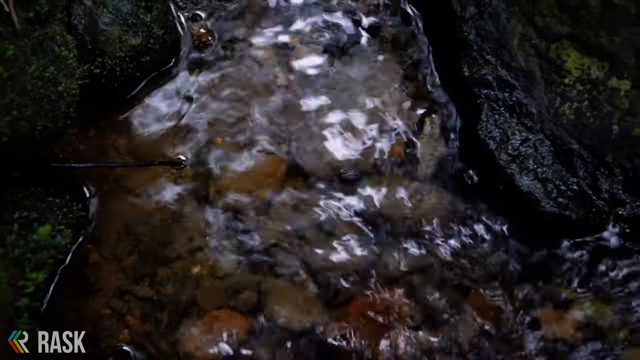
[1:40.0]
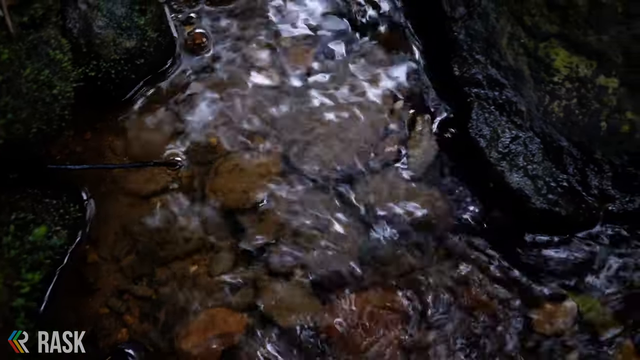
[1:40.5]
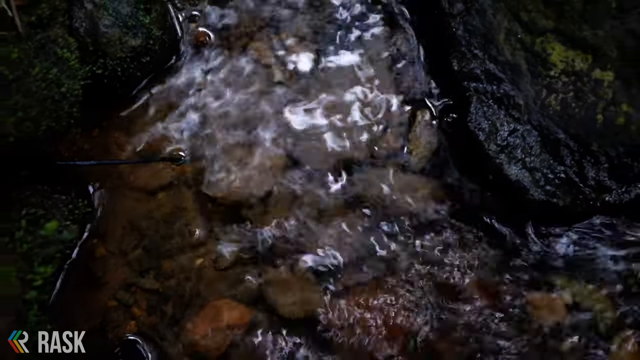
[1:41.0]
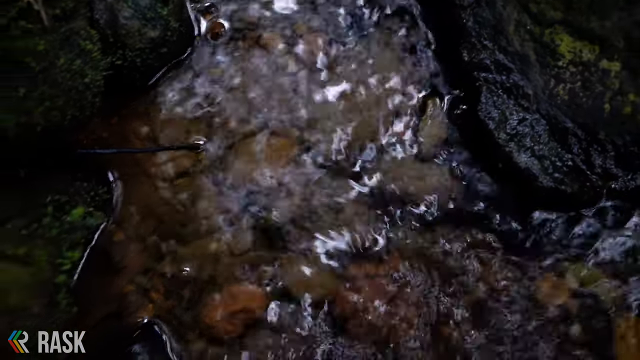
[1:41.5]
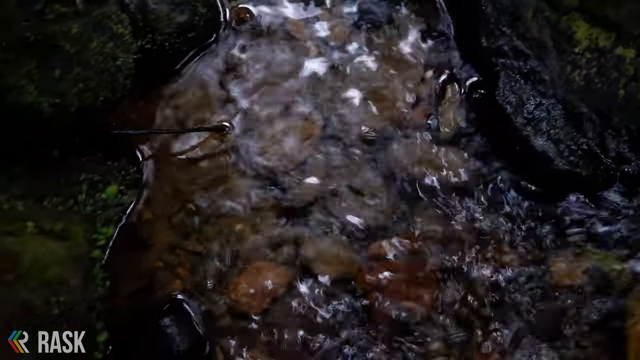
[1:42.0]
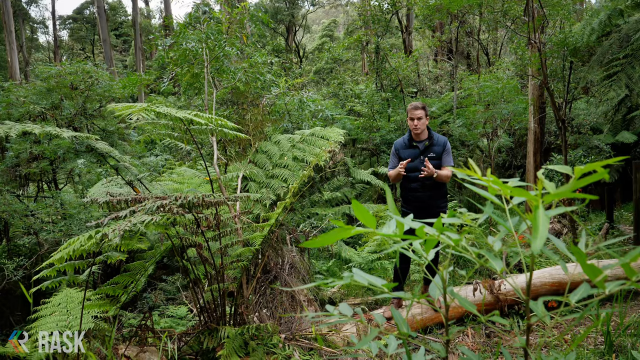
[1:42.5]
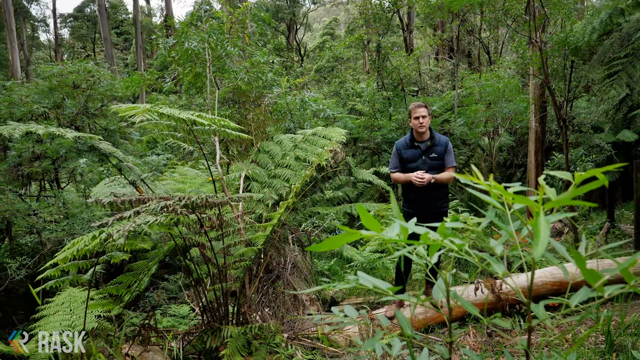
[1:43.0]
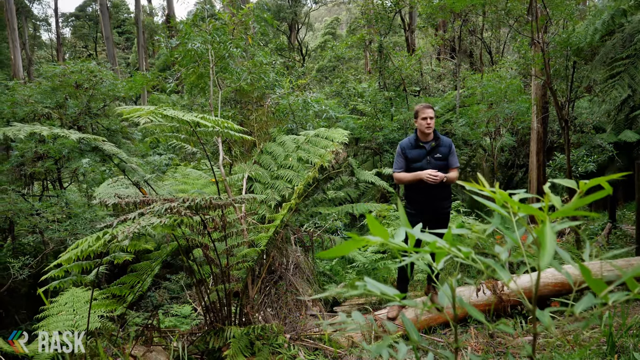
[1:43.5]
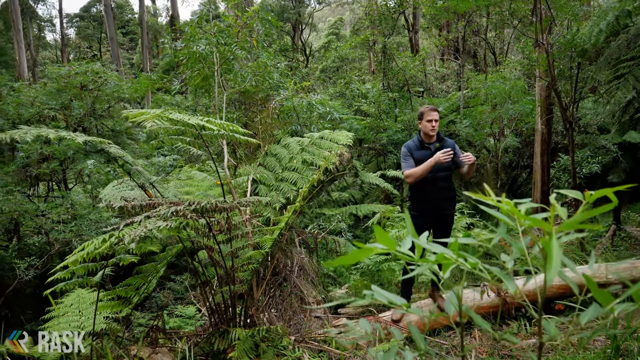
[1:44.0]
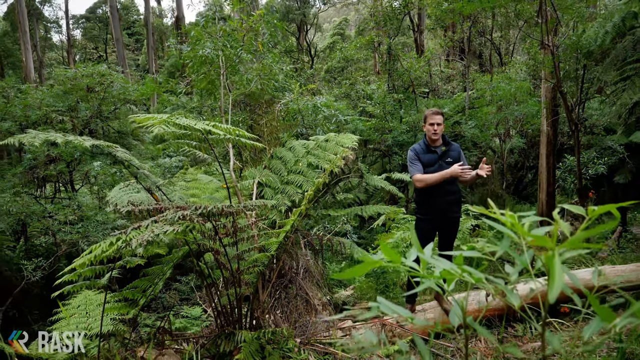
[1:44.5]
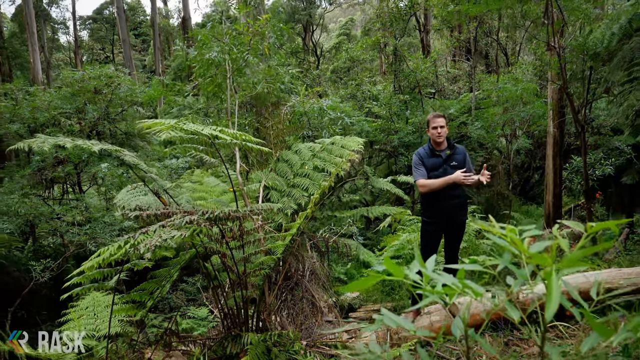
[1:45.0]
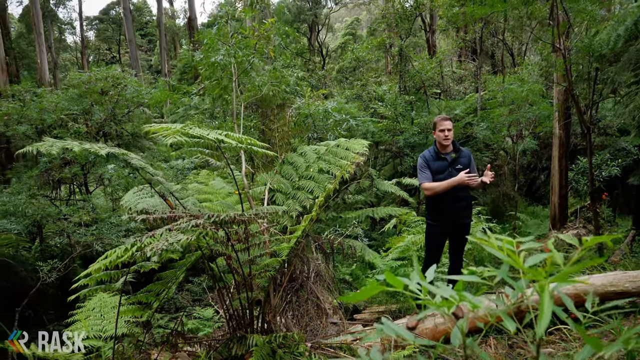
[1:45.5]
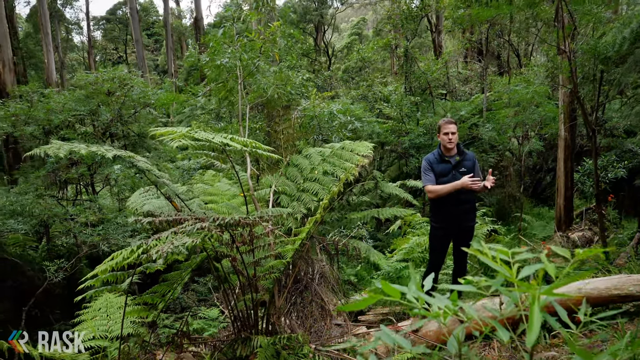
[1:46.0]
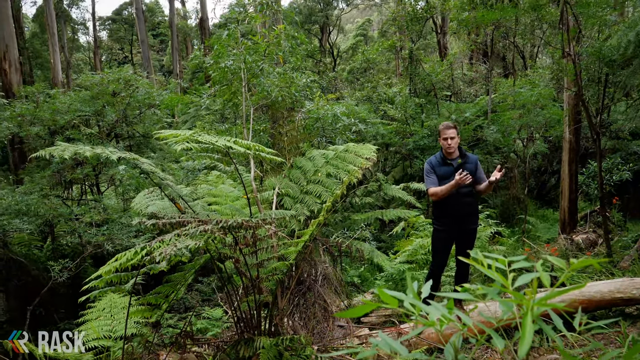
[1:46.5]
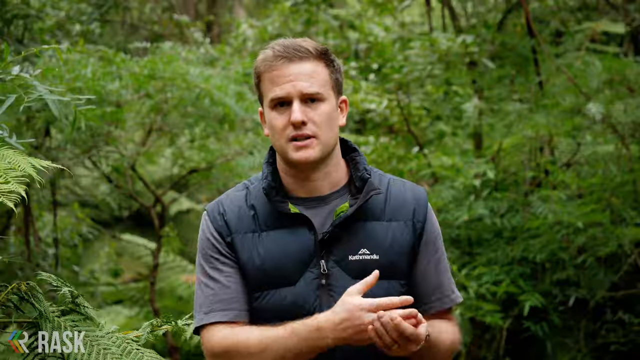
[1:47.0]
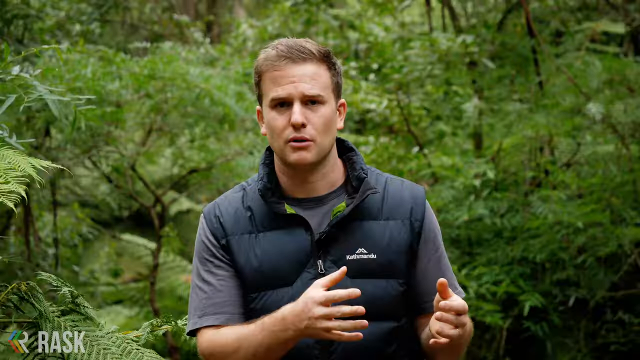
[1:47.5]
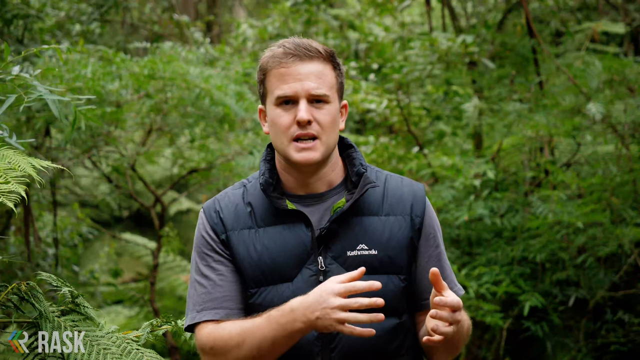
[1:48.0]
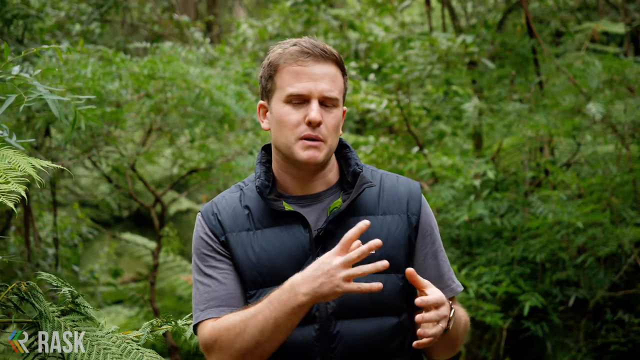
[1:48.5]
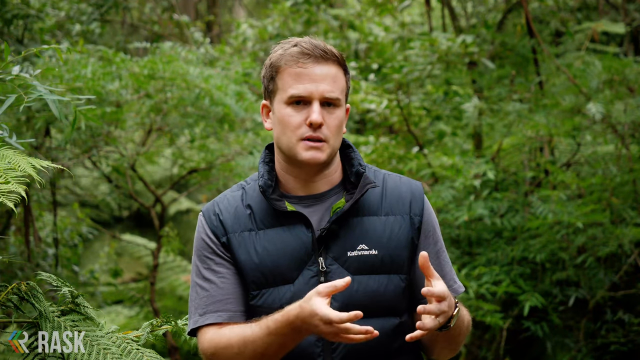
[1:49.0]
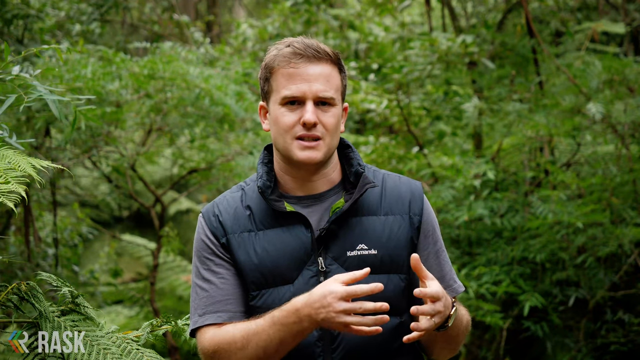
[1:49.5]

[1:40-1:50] Clear water flows along a path in a narrow stream. Next, the man appears in the bush, standing on a fallen tree, wearing black trousers and a small jacket, with short hair, explaining points with his hands. Bushes, flowers and trees surround him. He gesticulates with his hands, and his facial expression shows he is very serious.